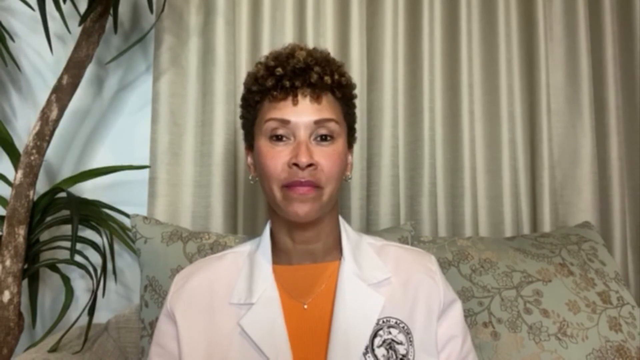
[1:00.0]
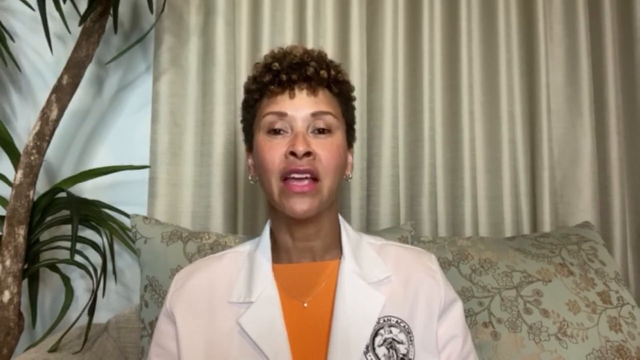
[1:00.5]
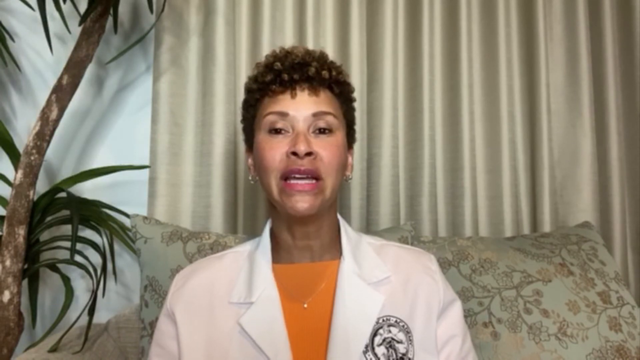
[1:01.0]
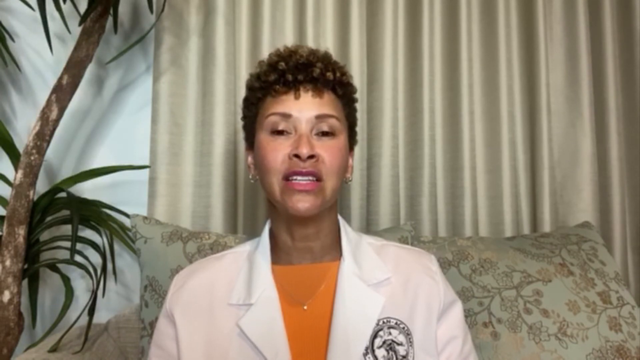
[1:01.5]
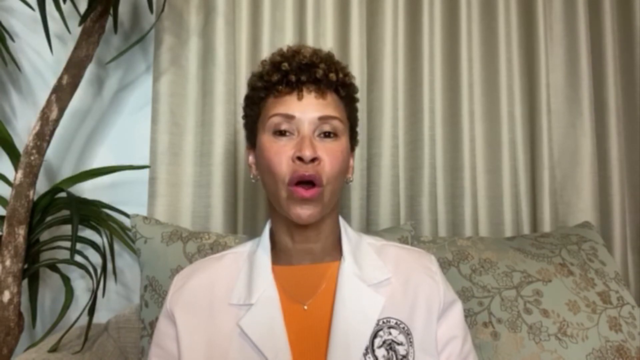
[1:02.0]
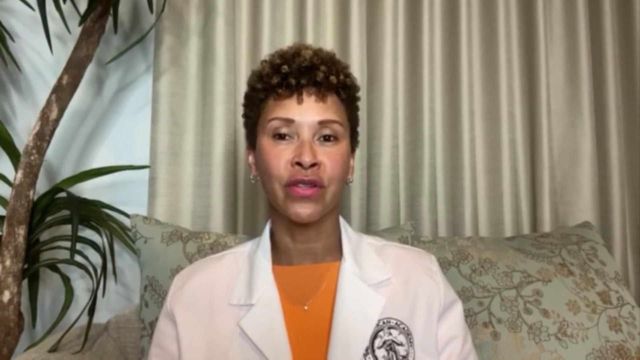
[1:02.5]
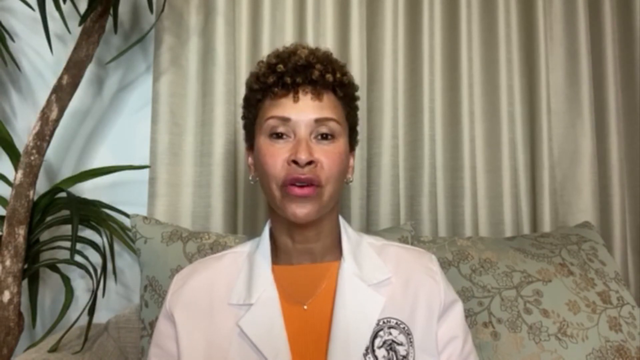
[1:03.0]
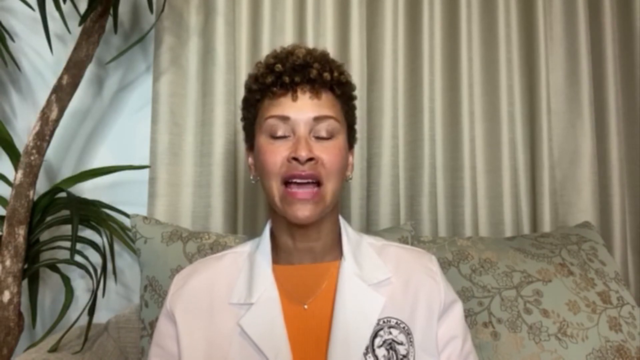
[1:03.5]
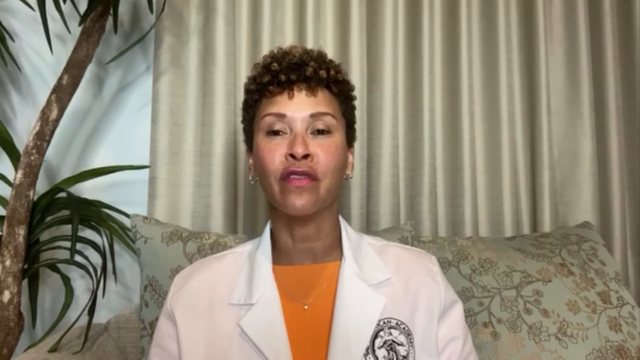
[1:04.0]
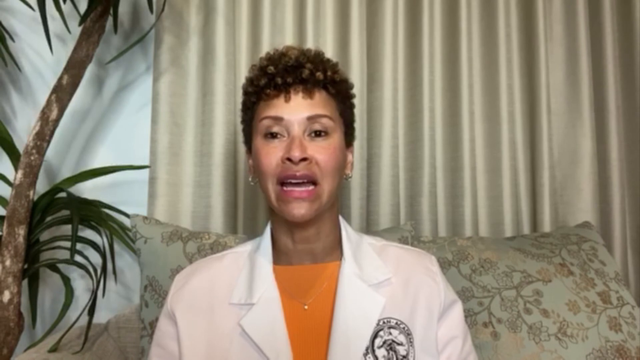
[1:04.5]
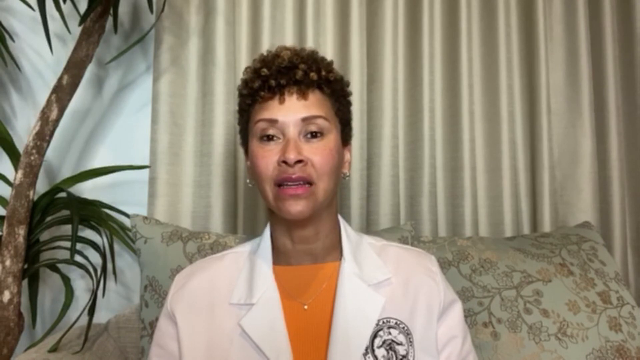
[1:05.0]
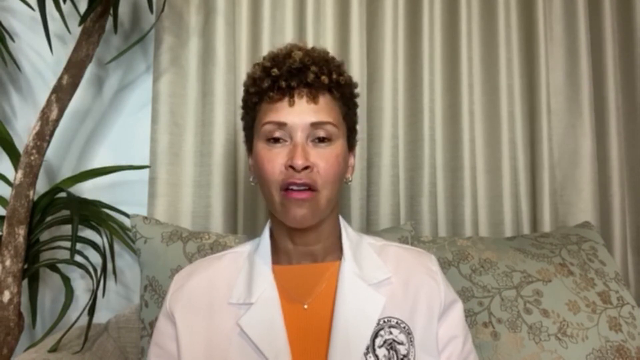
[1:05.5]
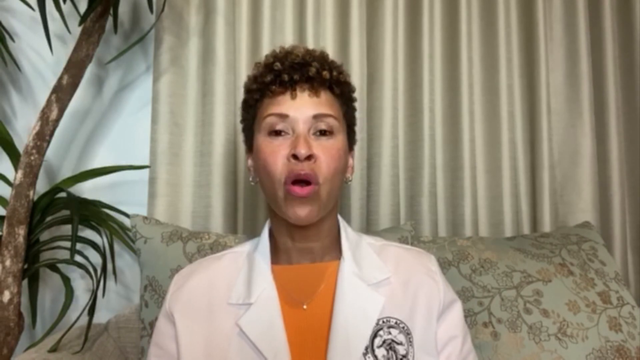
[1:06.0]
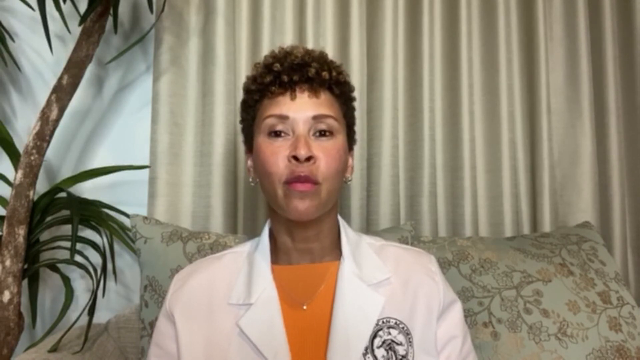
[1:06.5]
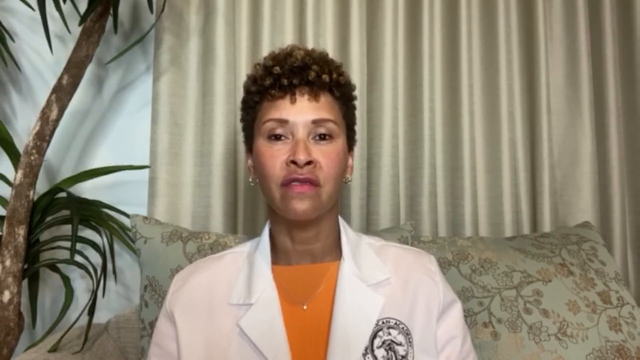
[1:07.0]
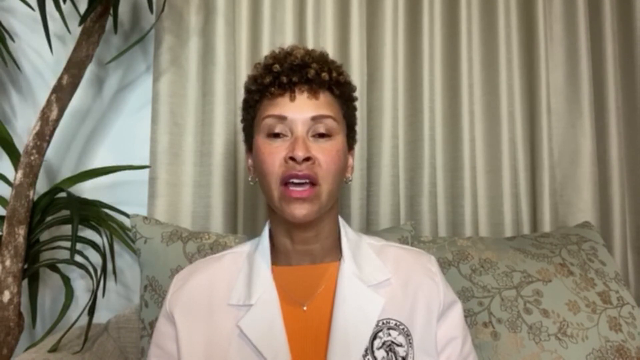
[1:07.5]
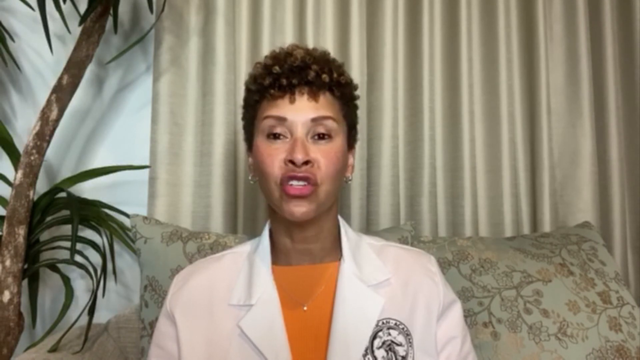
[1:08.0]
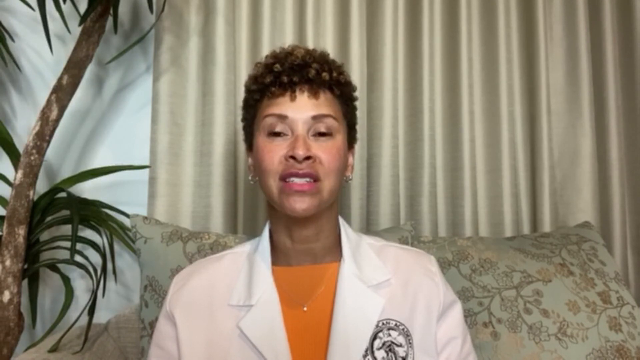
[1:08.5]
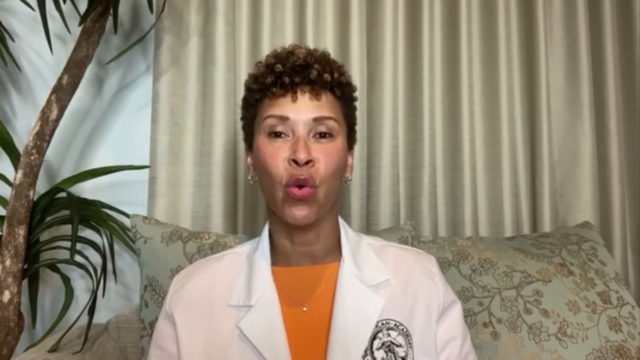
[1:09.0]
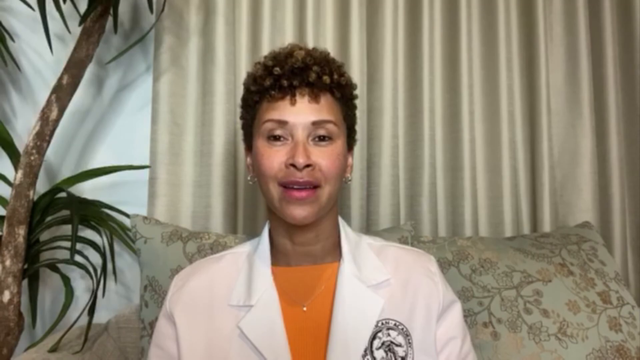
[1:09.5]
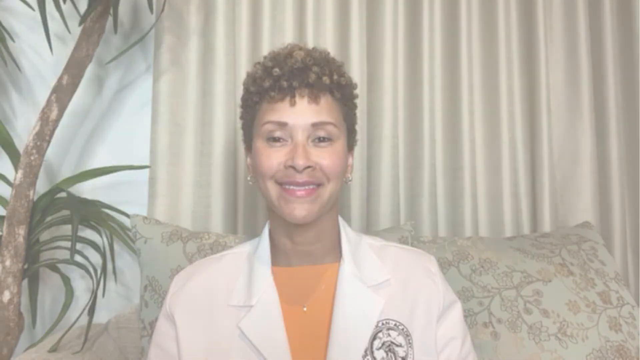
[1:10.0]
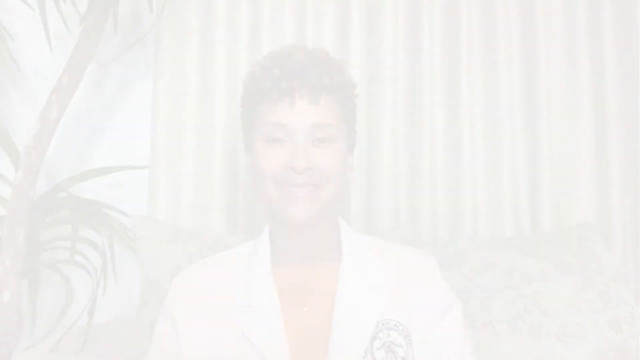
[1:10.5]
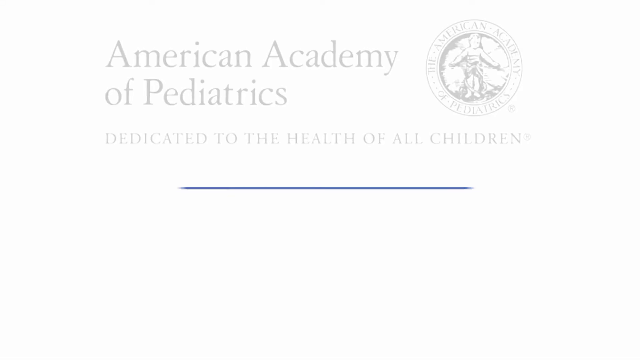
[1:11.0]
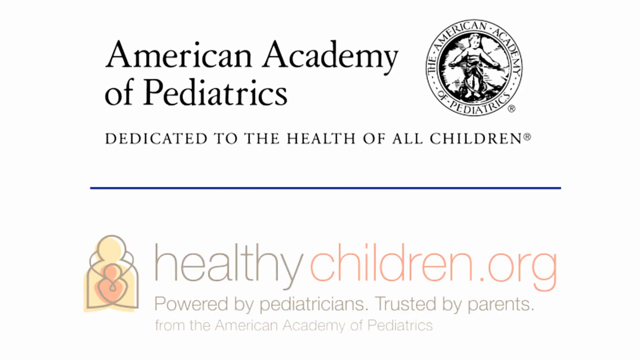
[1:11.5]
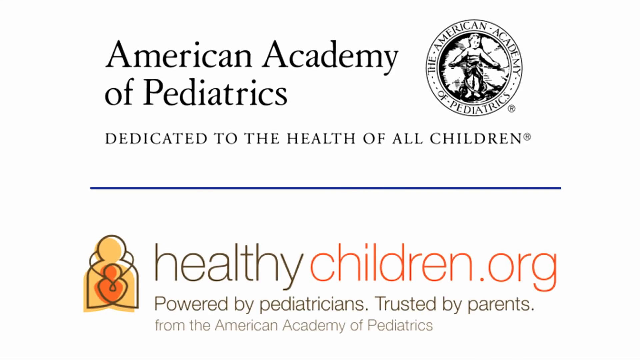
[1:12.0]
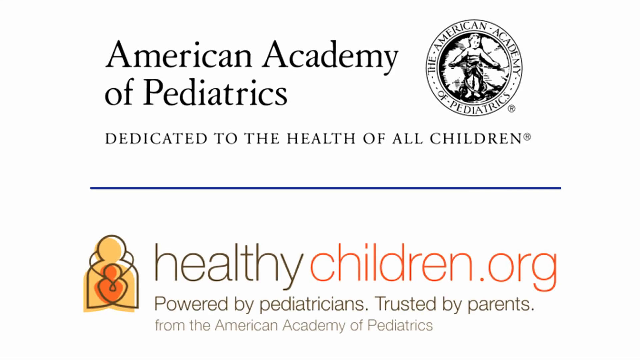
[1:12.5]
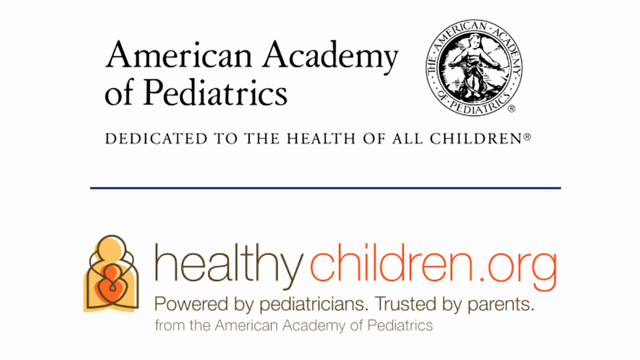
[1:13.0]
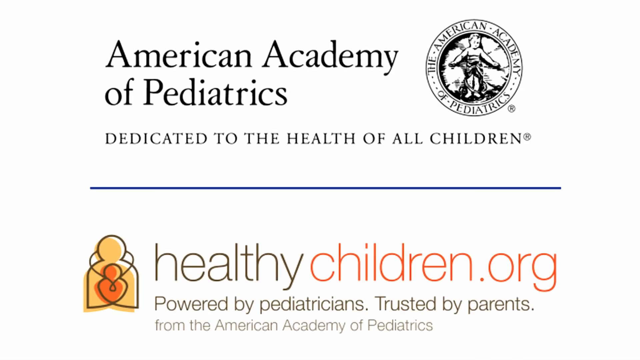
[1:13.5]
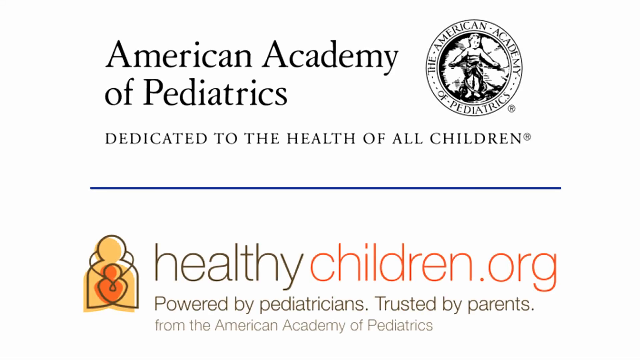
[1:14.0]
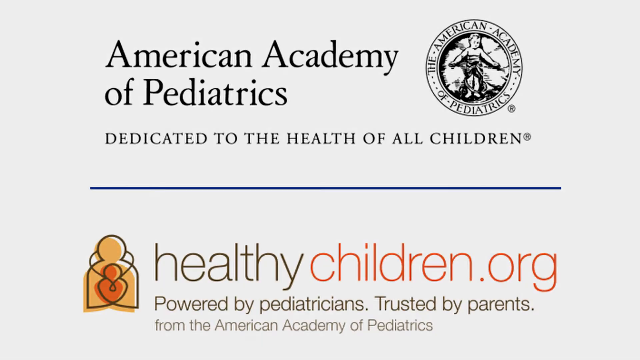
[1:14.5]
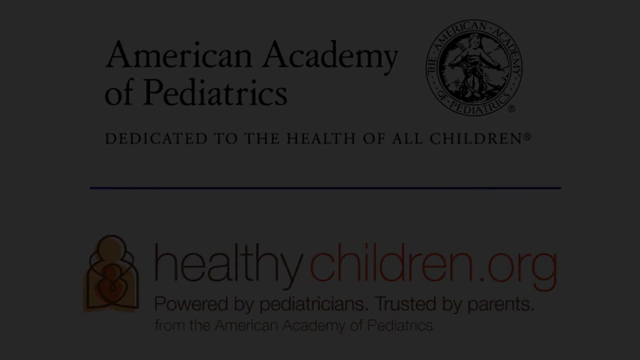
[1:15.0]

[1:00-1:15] A female doctor sits on a love seat facing the viewer, speaking. Behind her are white tan curtains, and to her left is an indoor palm tree; the wall behind the tree is a light white. The love seat is a light tan cream tone, with big fluffy pillows that have a floral tree branch pattern. She has short, neatly kept hair, small golden earrings near the earlobes, light brown skin, a kind face, brown hair and brown eyes. She wears a light orange top, a white lab coat and a small gold necklace with a small pendant. She speaks directly to the camera and smiles. The video then pans to an image with a white background and black text at the top center that says "American Academy of Pediatrics dedicated to the health of all children." Above that to the right is a circular emblem with an image of a child in the center and text around the outer perimeter reading "the American Academy" at the top and "of pediatrics" at the bottom. Text at the bottom of the screen says "healthychildren.org powered by pediatricians trusted by parents from the American Academy of Pediatrics."